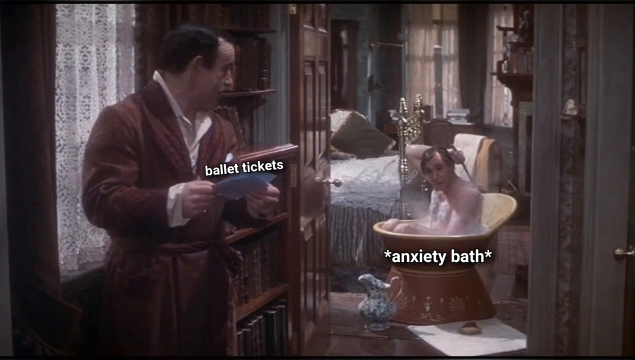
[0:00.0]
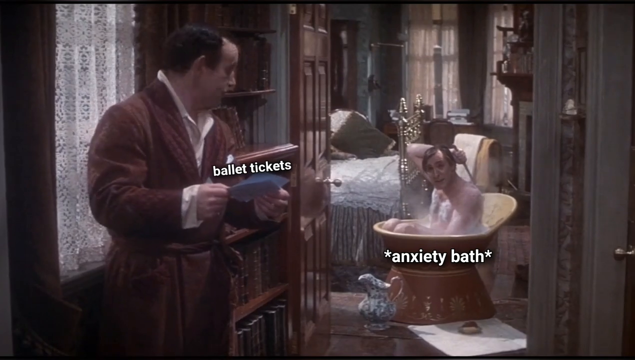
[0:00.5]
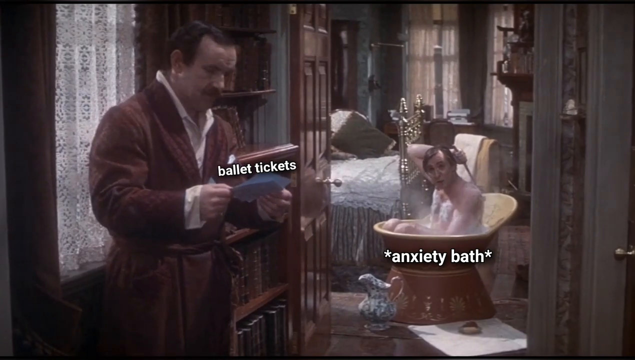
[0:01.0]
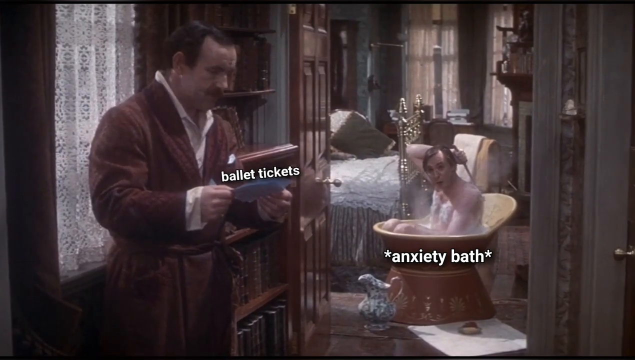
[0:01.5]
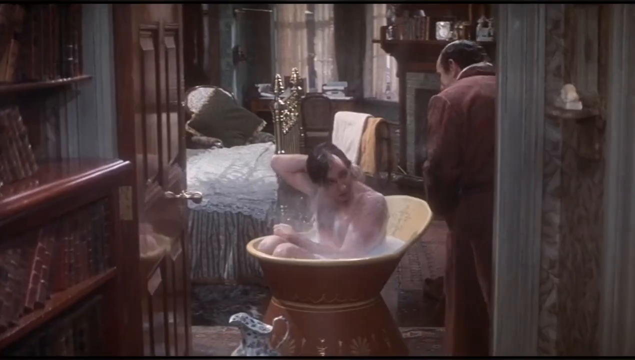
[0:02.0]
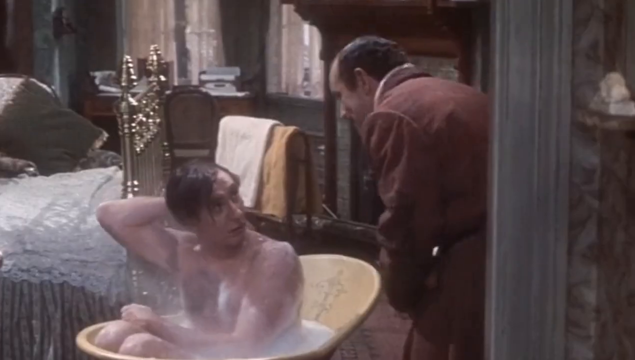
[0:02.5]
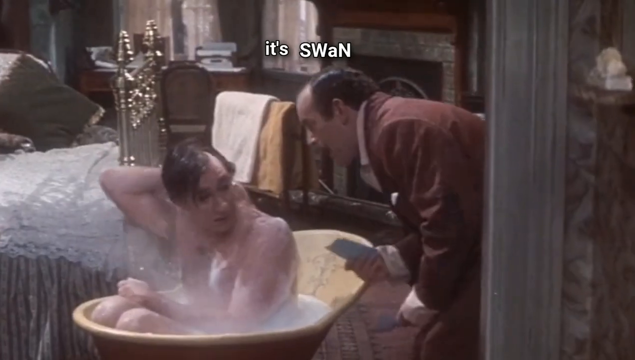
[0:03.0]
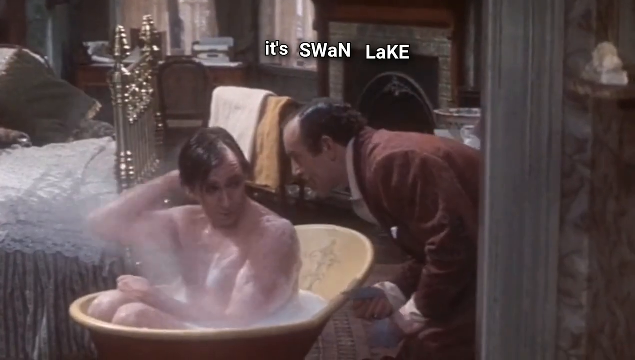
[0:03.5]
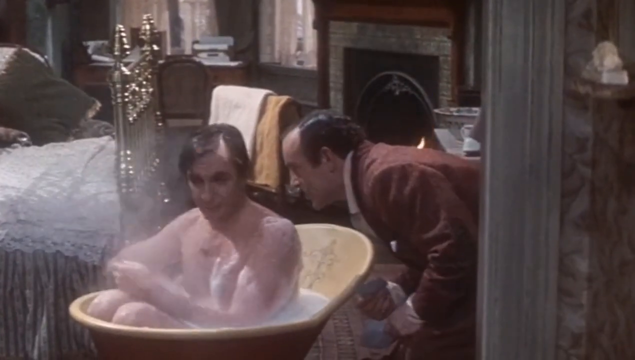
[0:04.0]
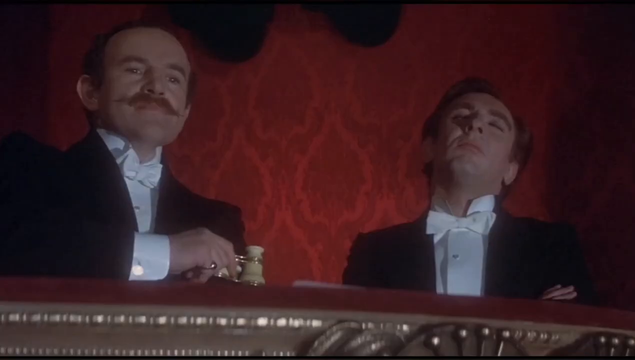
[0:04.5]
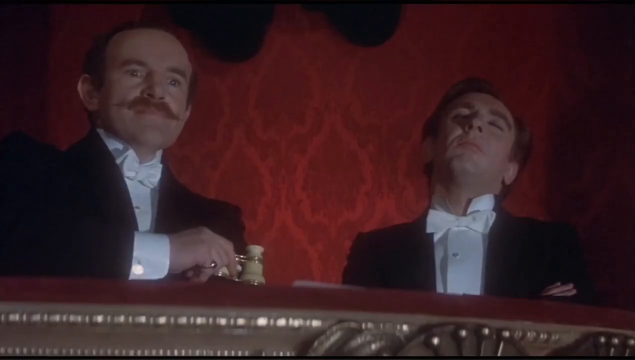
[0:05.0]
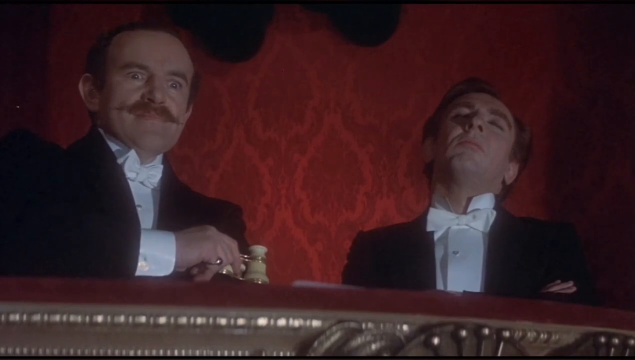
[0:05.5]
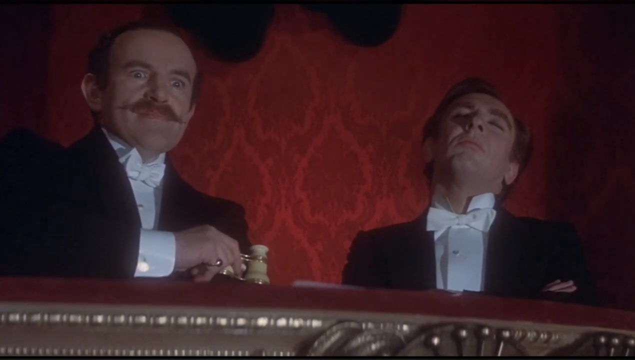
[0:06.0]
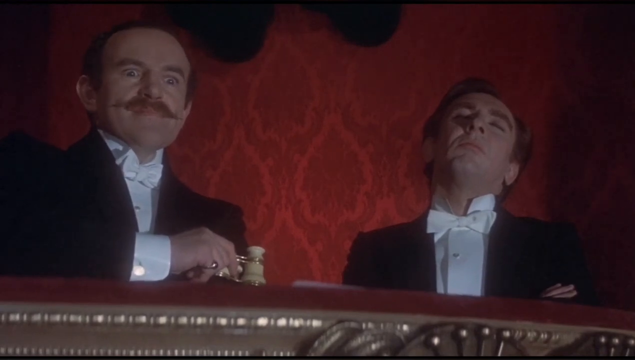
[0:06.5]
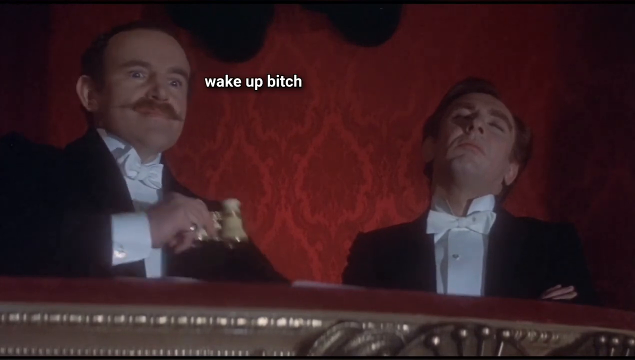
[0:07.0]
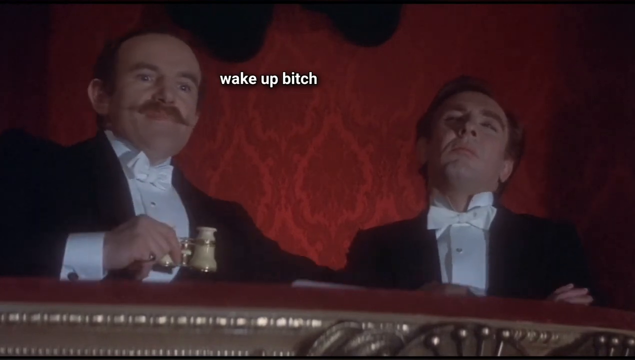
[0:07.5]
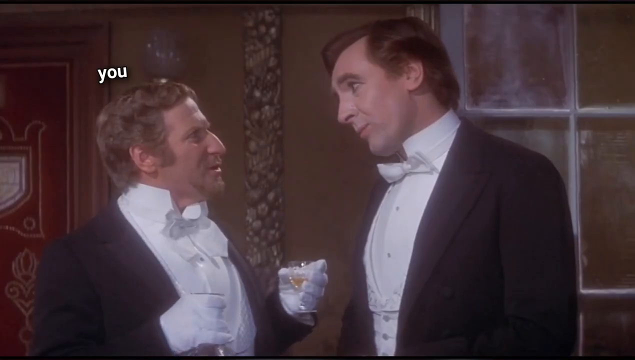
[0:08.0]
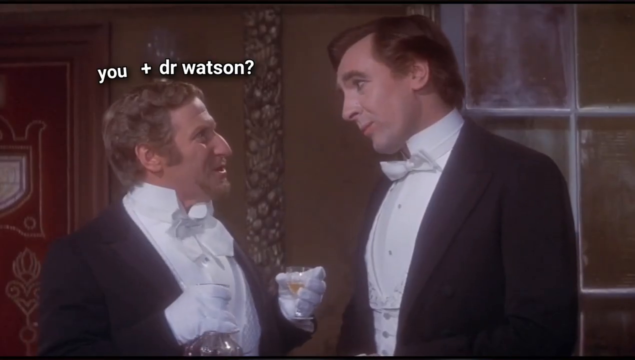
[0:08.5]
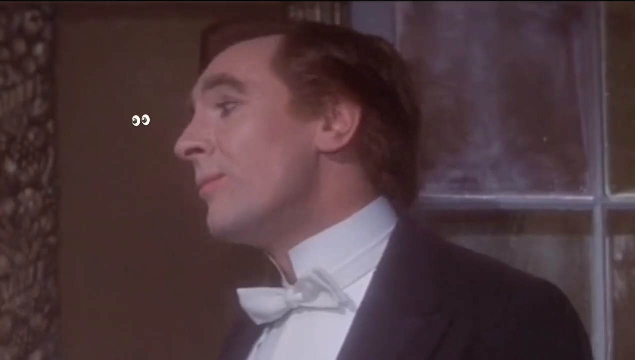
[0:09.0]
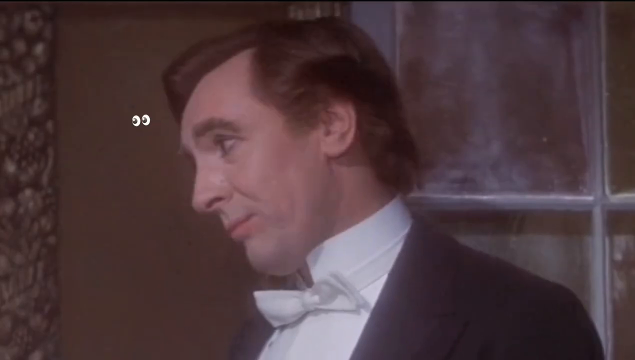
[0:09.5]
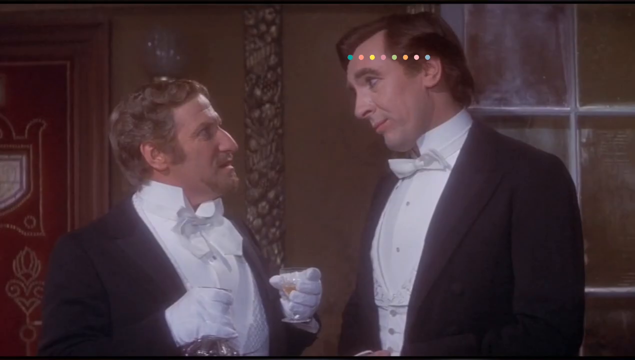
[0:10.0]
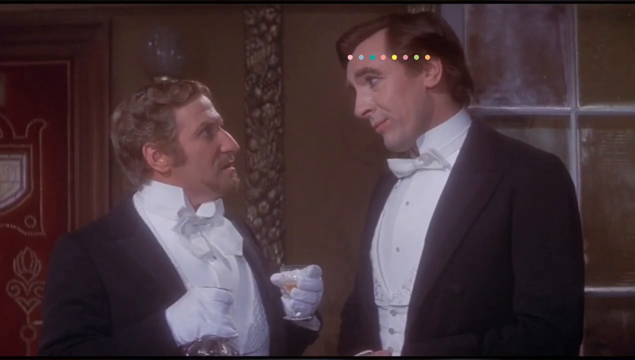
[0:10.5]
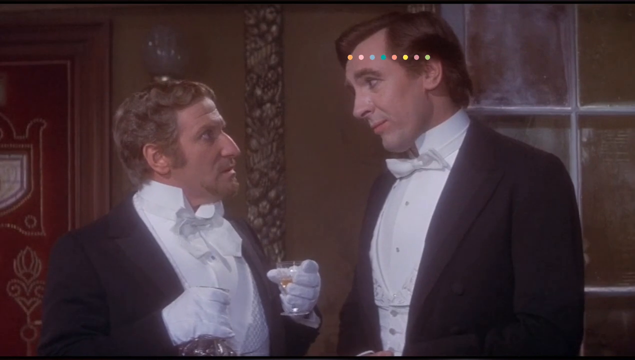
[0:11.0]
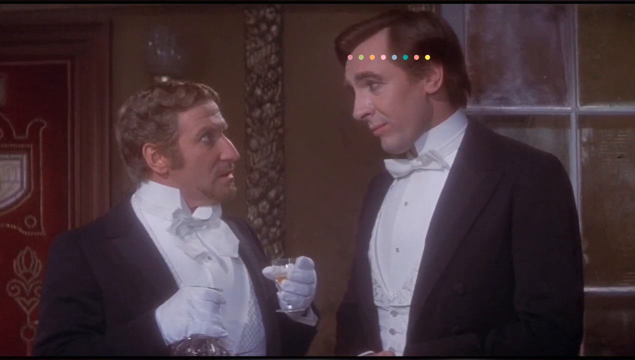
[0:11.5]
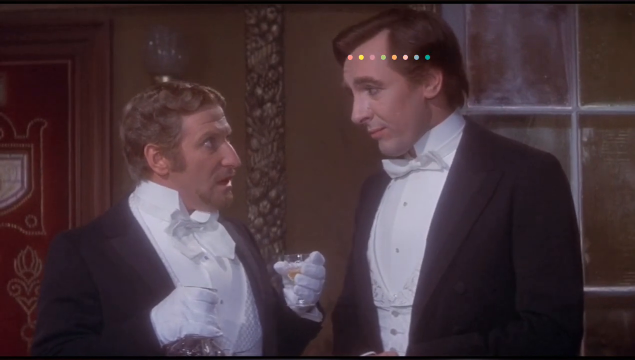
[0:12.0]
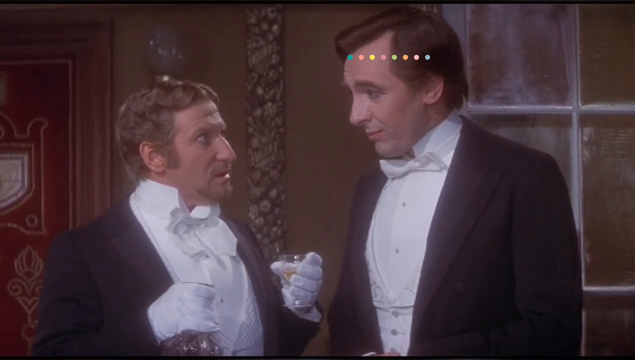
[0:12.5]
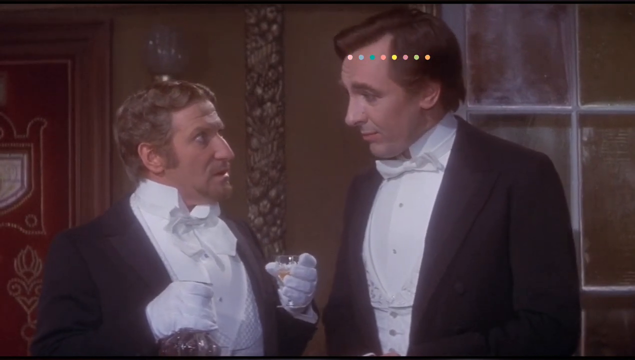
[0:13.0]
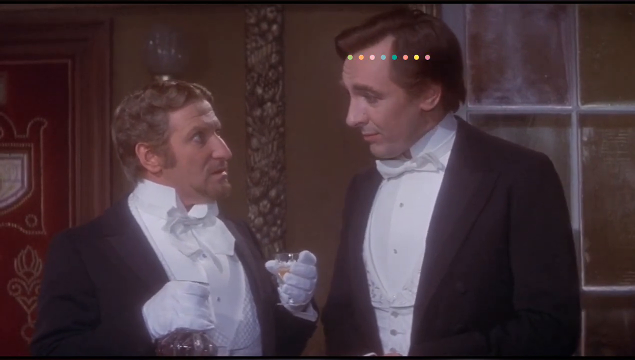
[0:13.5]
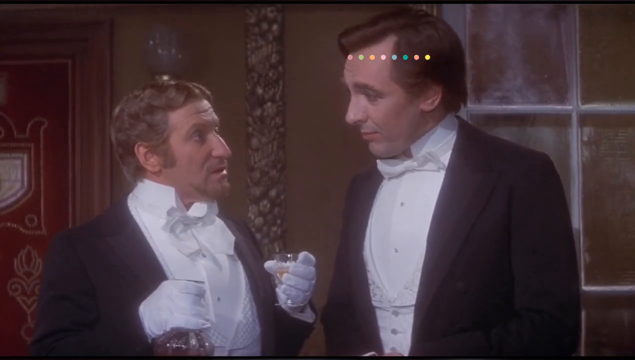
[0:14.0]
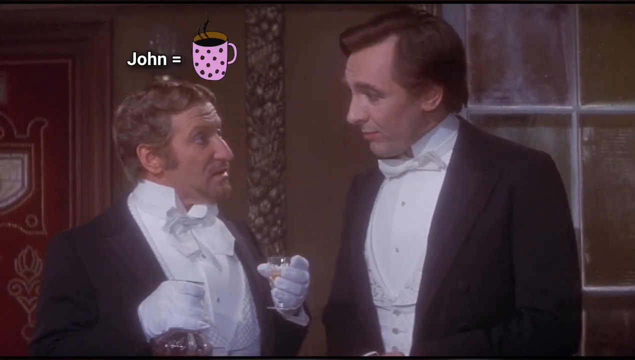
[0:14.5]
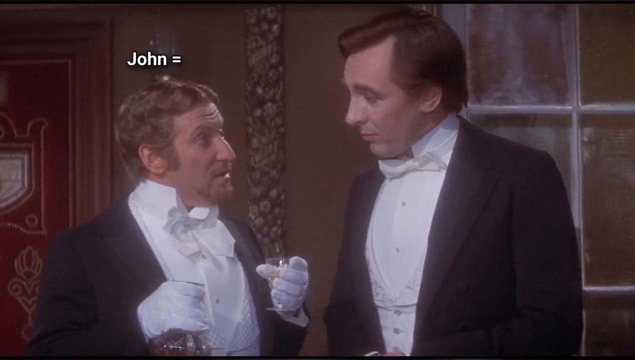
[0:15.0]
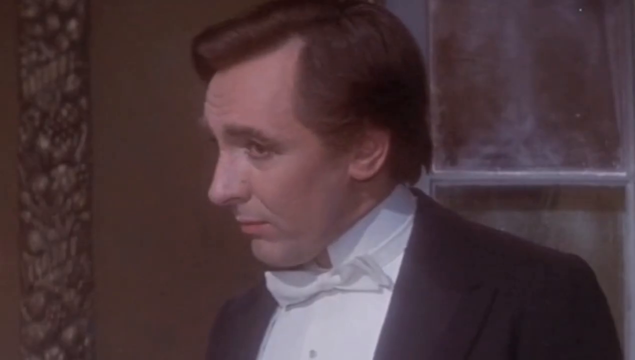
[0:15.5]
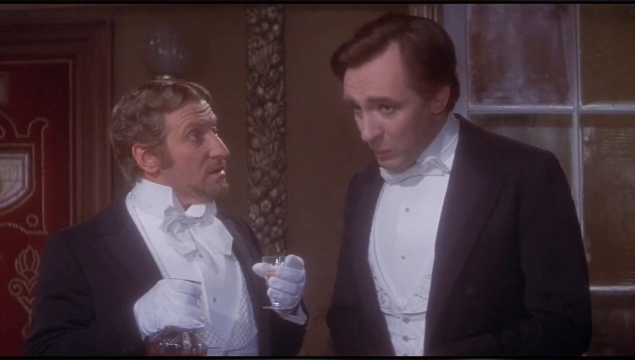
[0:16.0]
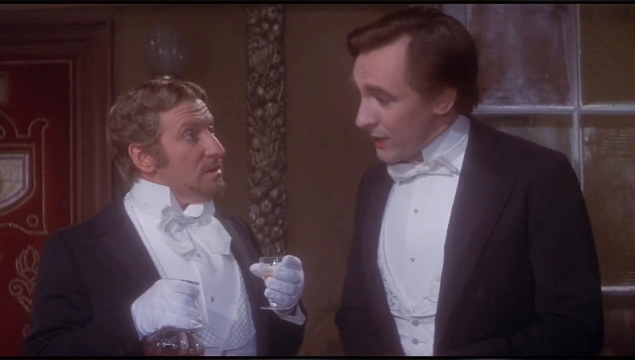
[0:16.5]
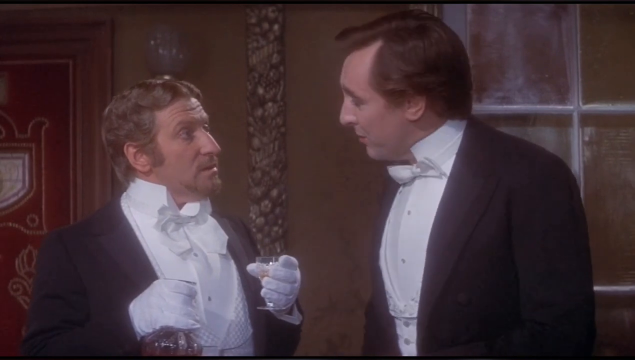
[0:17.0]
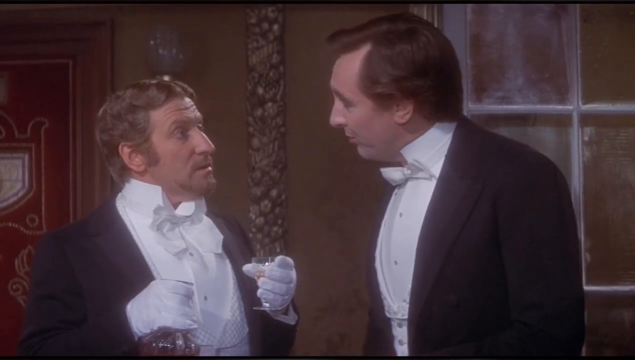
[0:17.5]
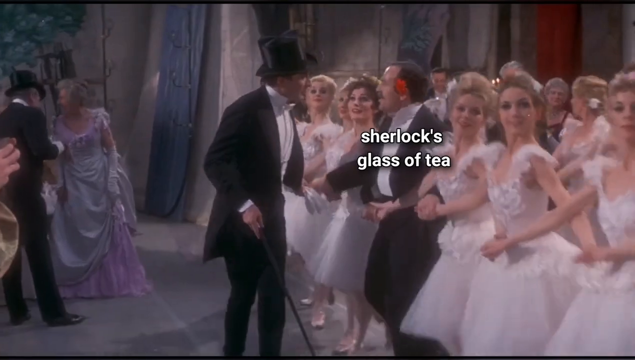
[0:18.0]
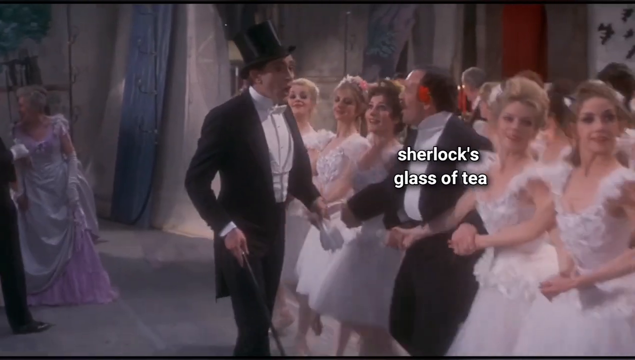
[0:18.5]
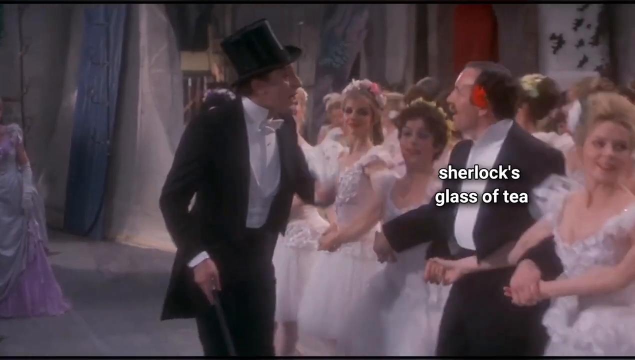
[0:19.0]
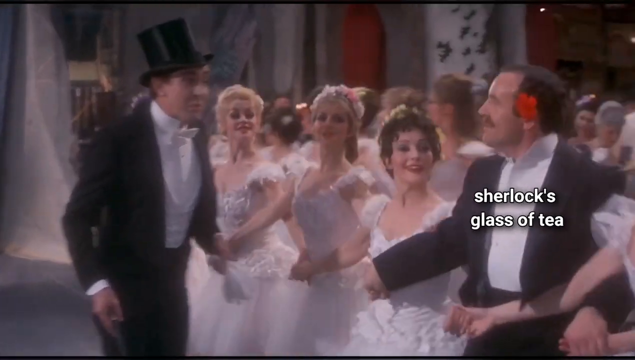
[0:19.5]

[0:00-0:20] A white man with black hair and a long robe appears. A blonde is in an old-fashioned tub of the kind filled with water by hand. Men in black tuxedos with white shirts and white ties are shown next; they appear to be at some type of opera or play, sitting up in a crowd watching the stage. A tall white gentleman with brown hair, wearing a tuxedo with a white bow tie, talks to another gentleman who has blonde hair and a blonde goatee and is a little older. This second man wears a black jacket with a white shirt, a white vest and some type of white tie. Behind them is a beige wall with some type of red art print on it. The gentleman holds a glass of some type of liquor.